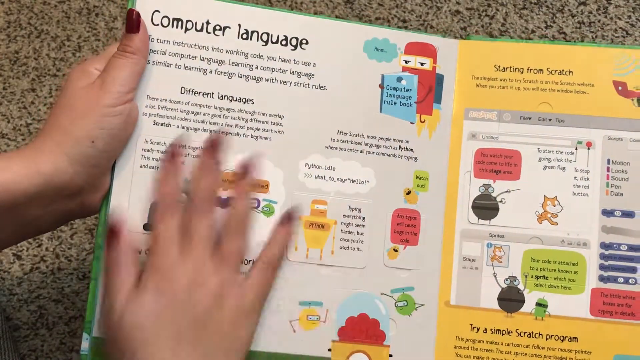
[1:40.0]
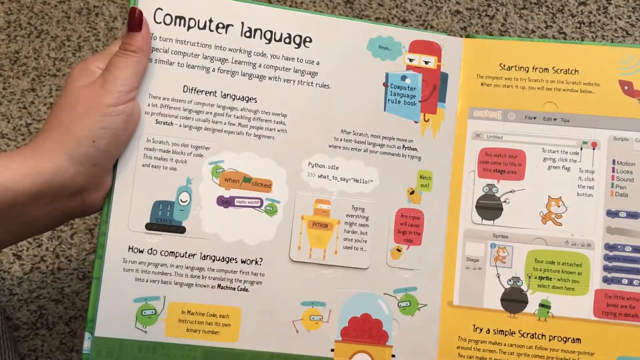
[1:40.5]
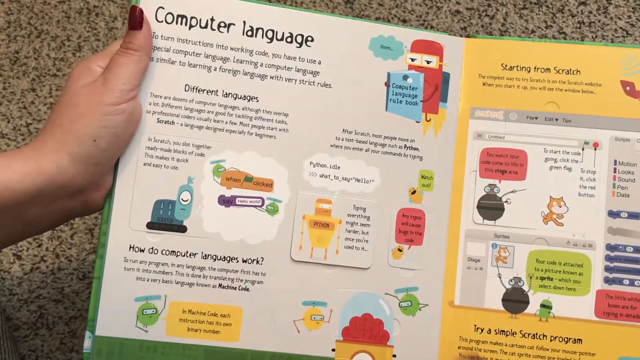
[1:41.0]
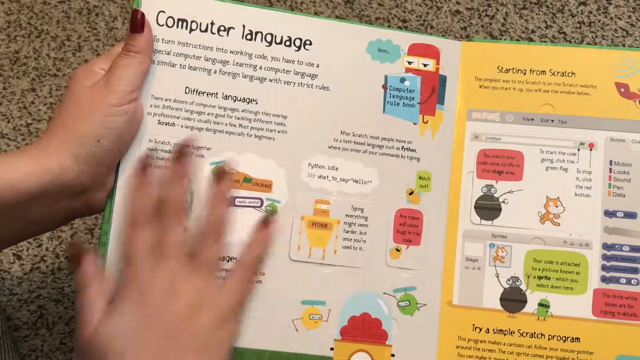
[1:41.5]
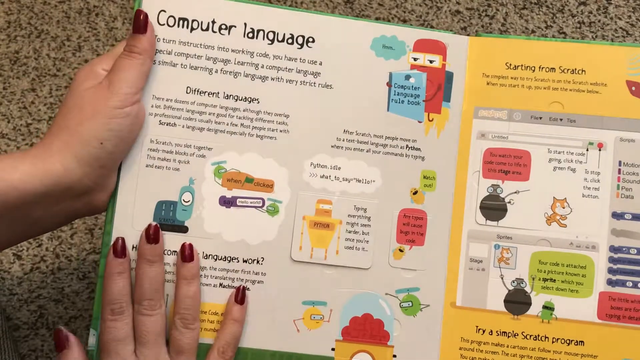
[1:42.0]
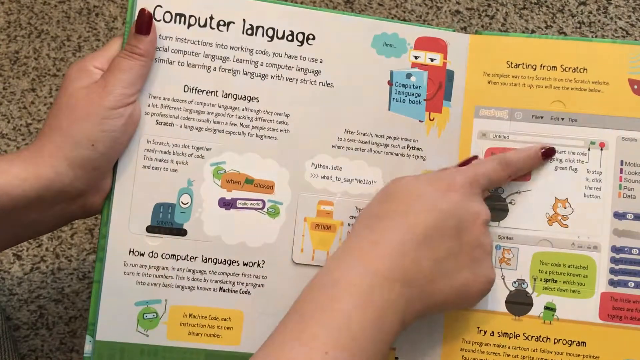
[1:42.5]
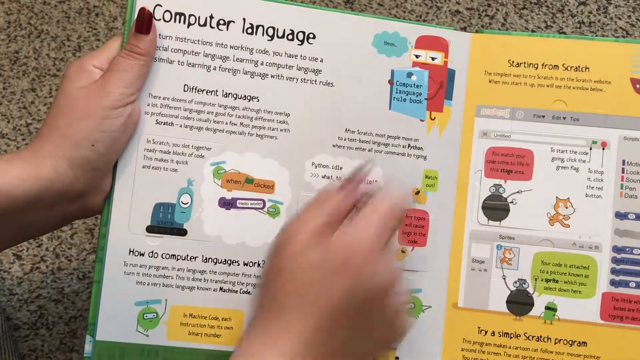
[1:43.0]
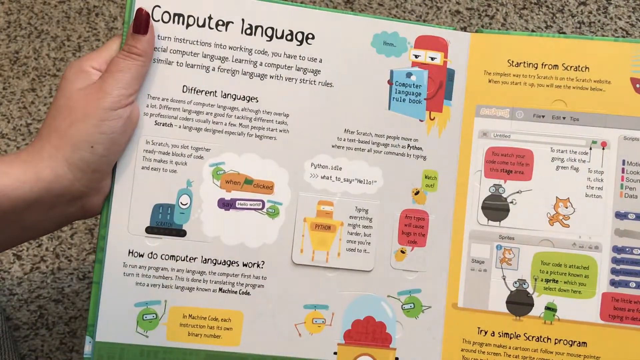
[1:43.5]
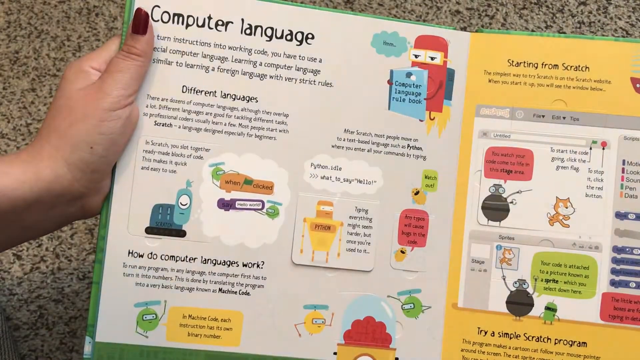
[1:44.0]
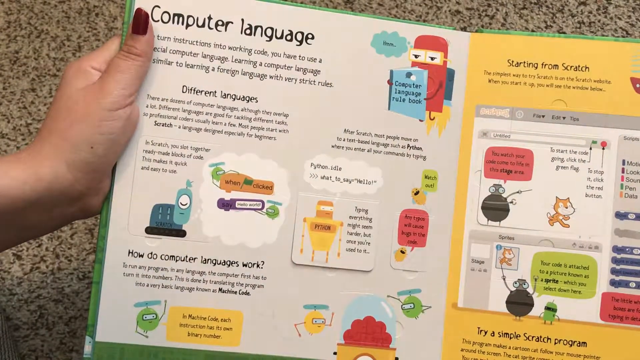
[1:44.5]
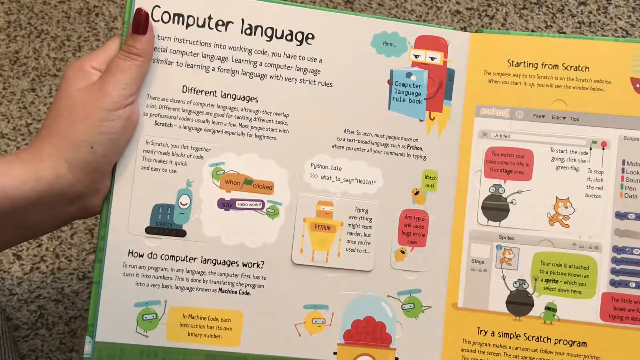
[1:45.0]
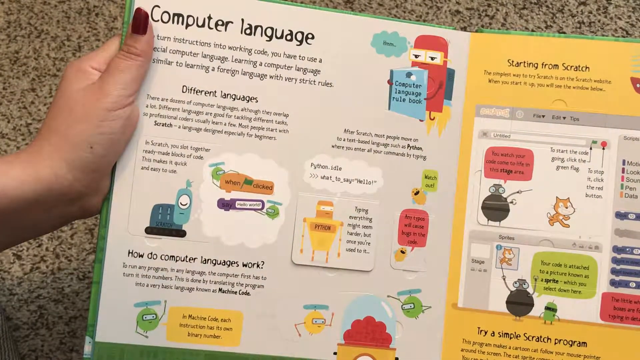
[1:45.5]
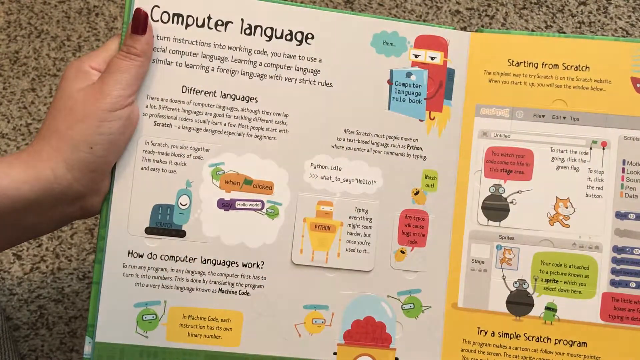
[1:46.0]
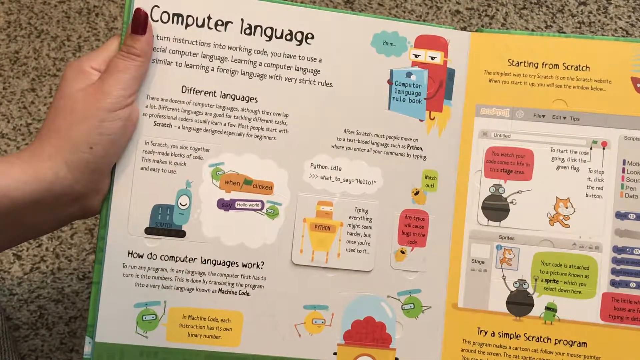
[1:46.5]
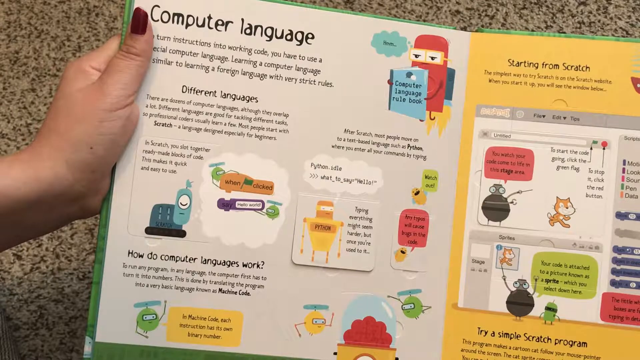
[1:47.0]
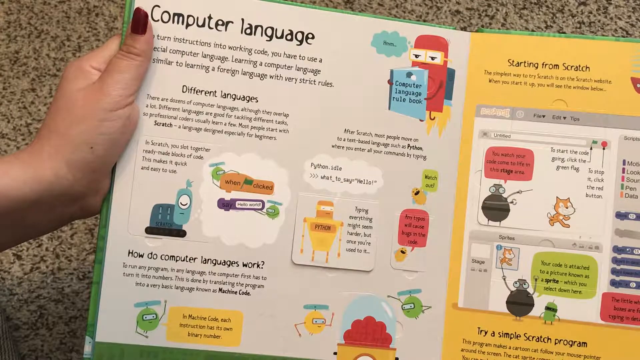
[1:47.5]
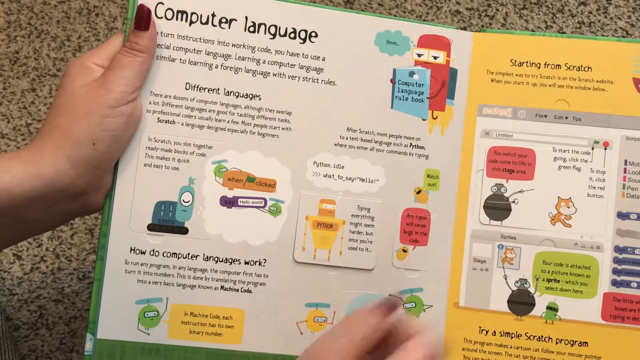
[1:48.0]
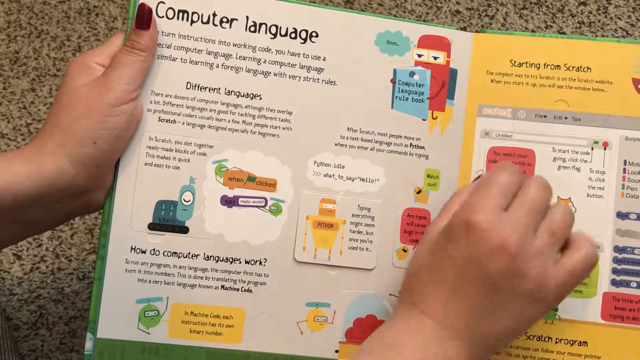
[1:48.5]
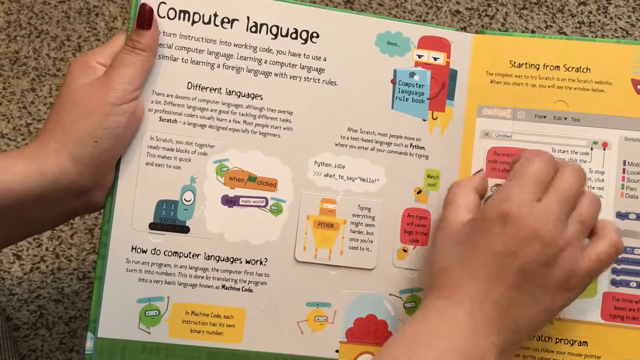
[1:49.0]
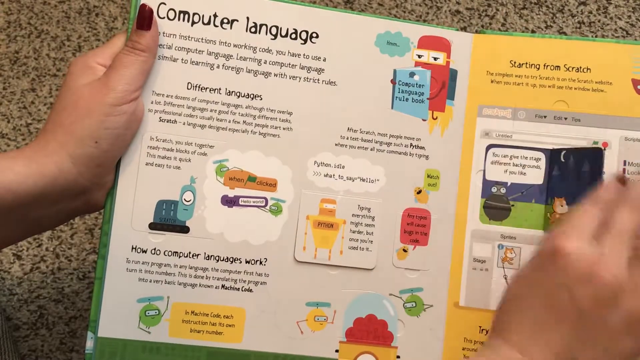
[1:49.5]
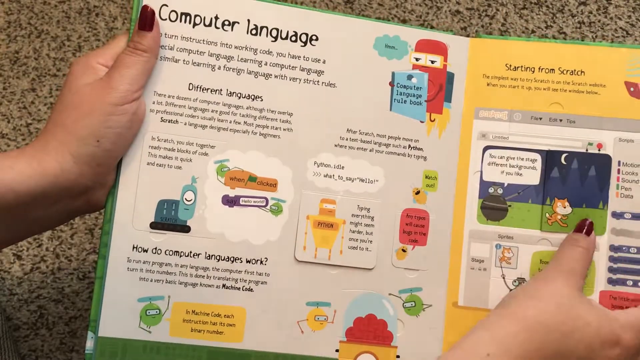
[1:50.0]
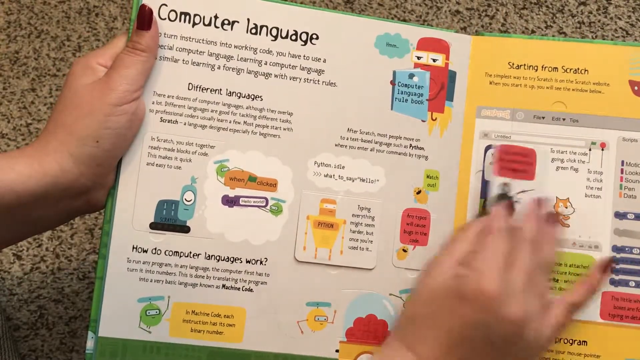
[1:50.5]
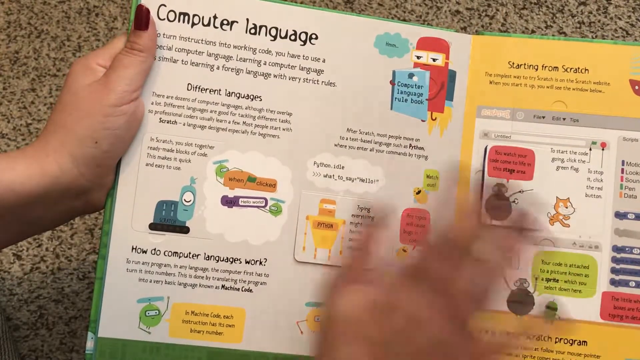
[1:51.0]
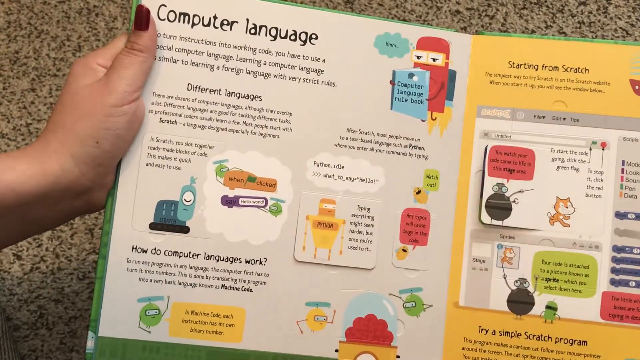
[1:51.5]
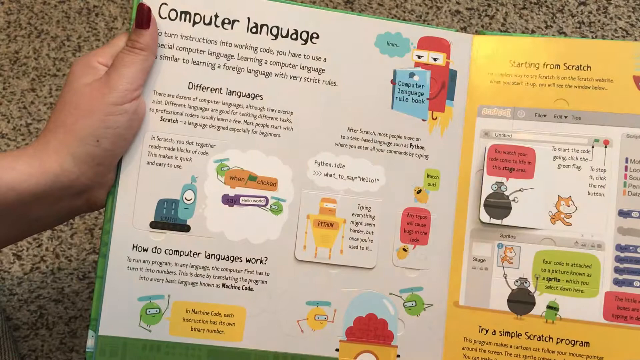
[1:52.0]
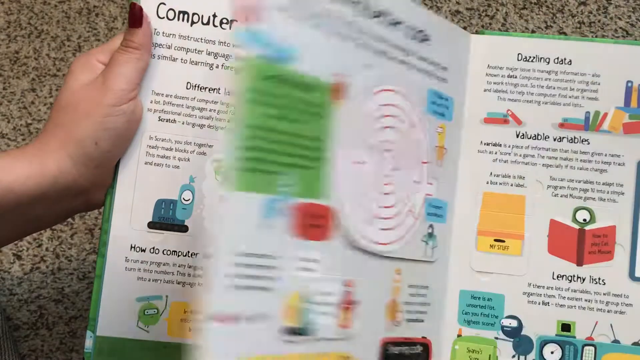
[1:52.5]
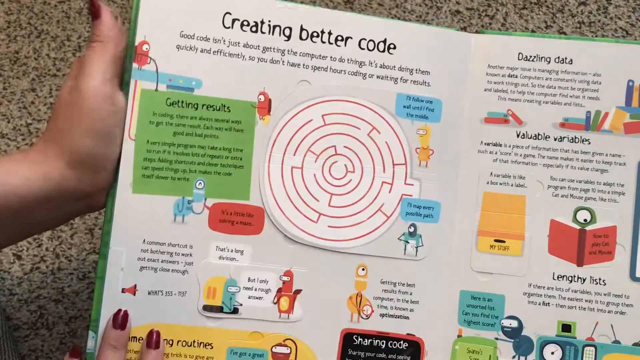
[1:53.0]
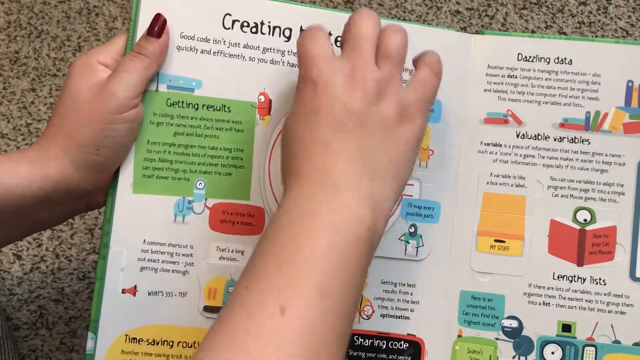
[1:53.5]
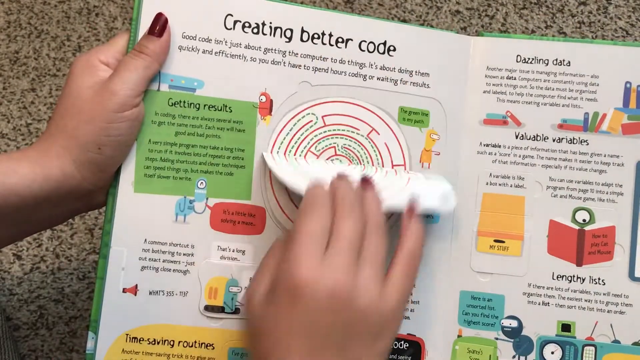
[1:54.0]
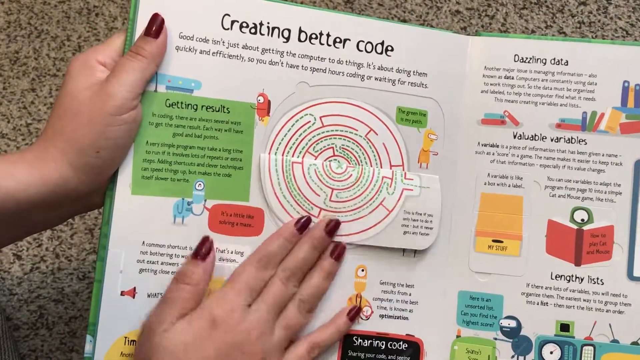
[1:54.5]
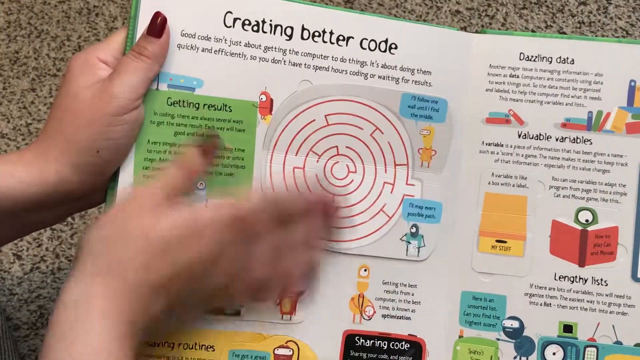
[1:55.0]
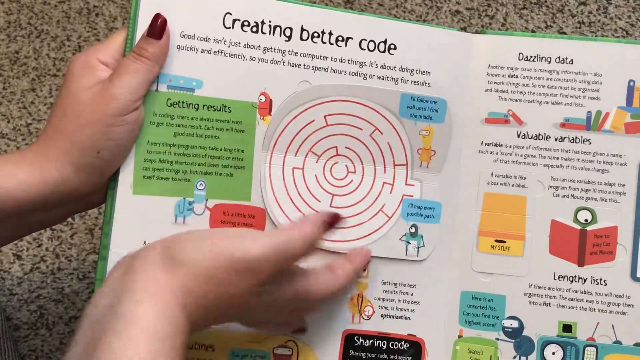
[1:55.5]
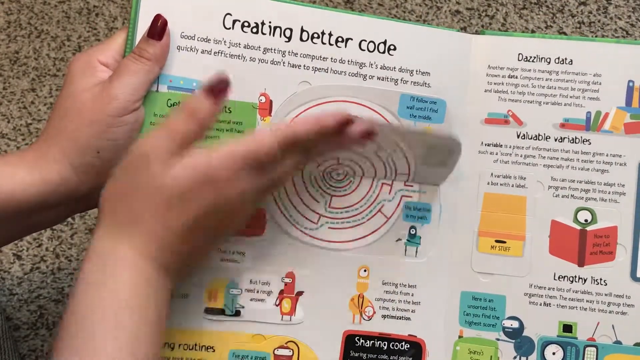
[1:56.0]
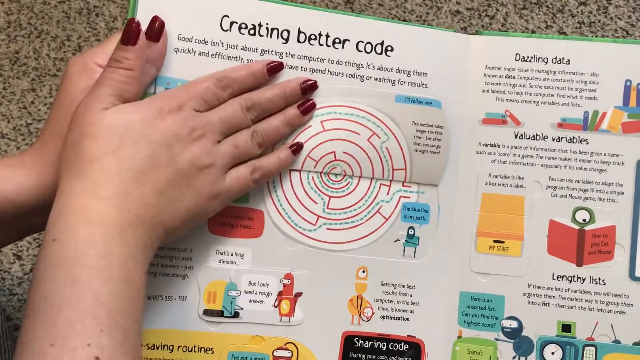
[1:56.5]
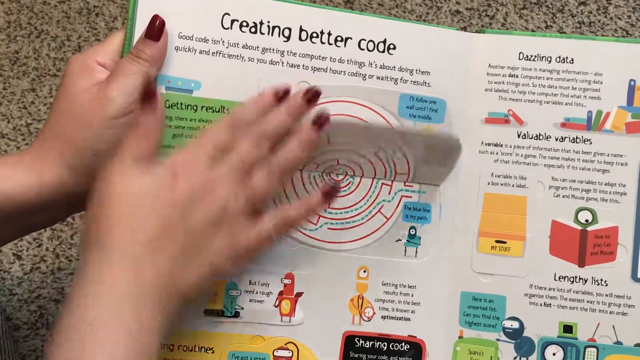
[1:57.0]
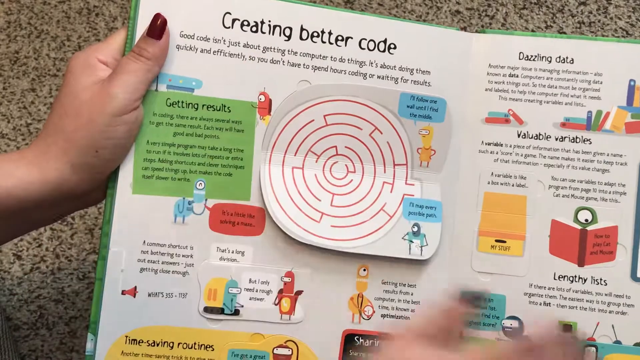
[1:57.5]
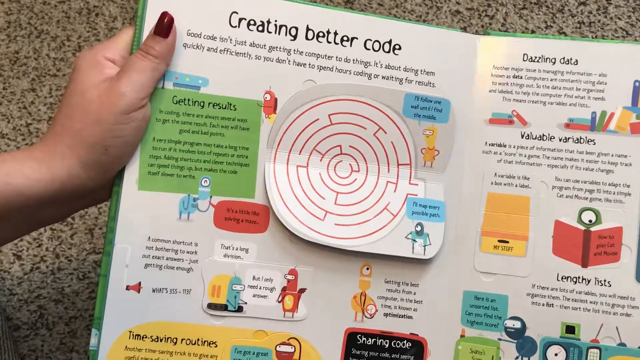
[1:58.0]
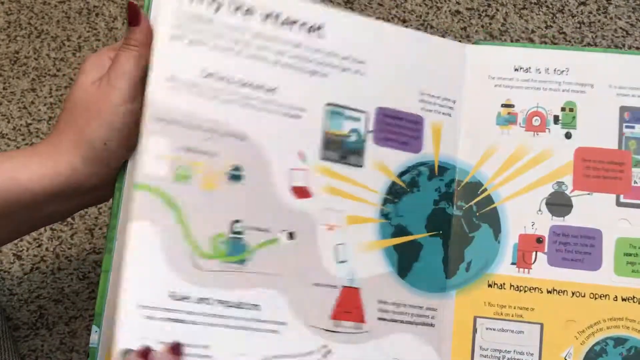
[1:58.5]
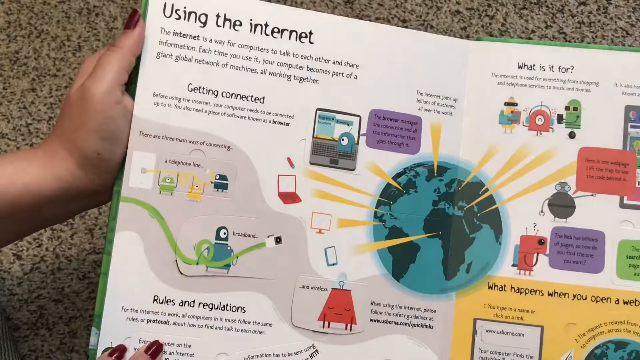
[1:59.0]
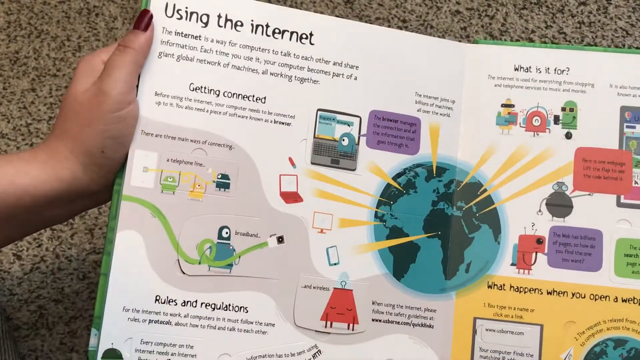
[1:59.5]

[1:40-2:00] The woman makes a circular motion over the whole page, then points to a chart on the next page titled "Starting from scratch". For a few seconds nothing happens. Under "Starting from scratch" there is an illustration of a browser window, and she flips a character there to show what it does afterwards: under the flap it is nighttime, and the grenade-like character is in a park chasing what looks like a cat, with a talk bubble above it. She turns to the page titled "Creating better coding", which has a circular maze; she flips it backwards to show a completed part of the maze, folding the top half of the maze and then the bottom half. She then flips to the page "Using the internet" and points at a robot holding a coiled hose.